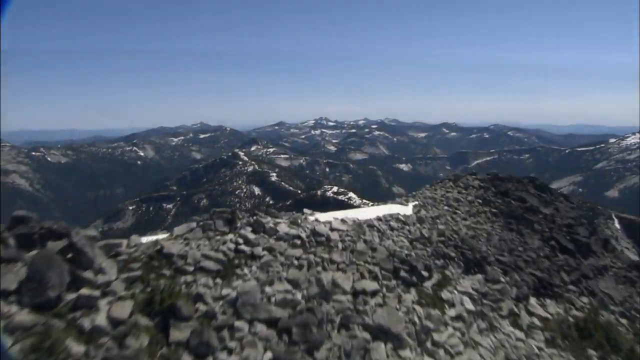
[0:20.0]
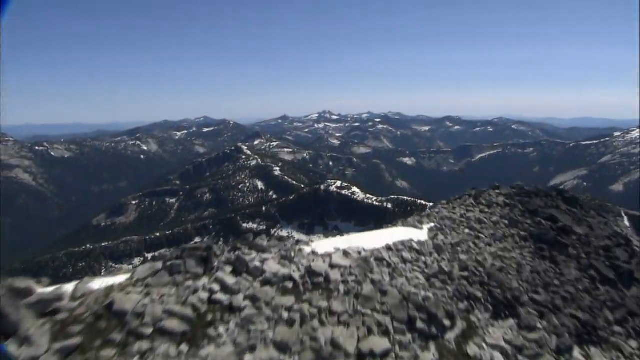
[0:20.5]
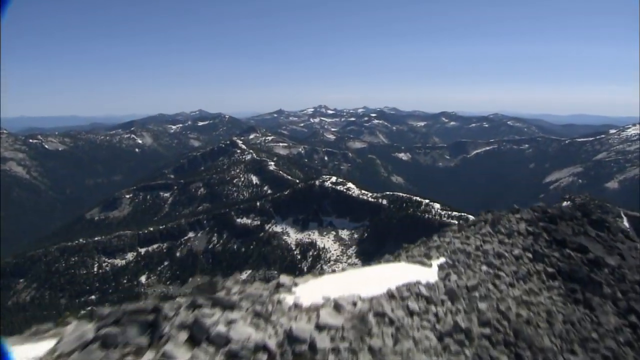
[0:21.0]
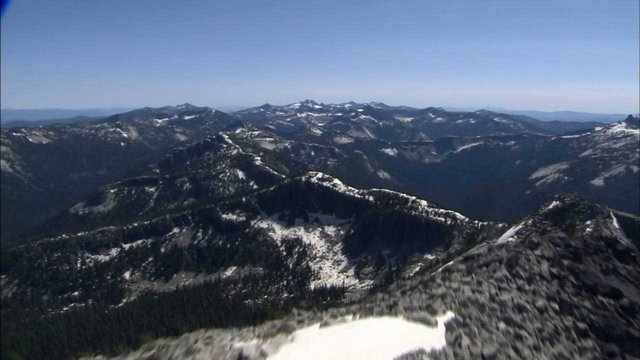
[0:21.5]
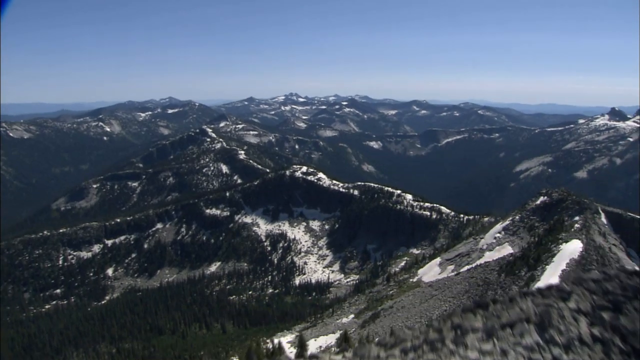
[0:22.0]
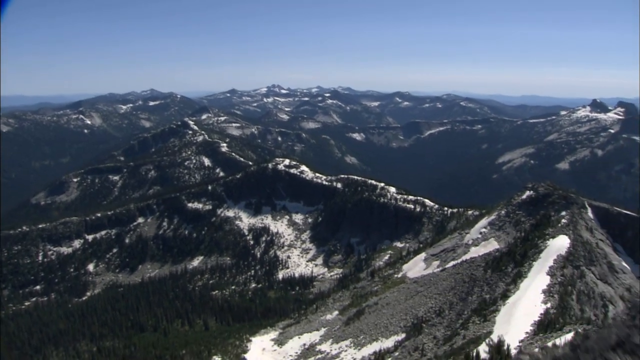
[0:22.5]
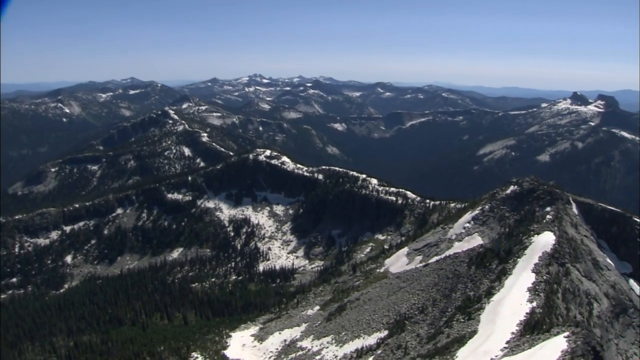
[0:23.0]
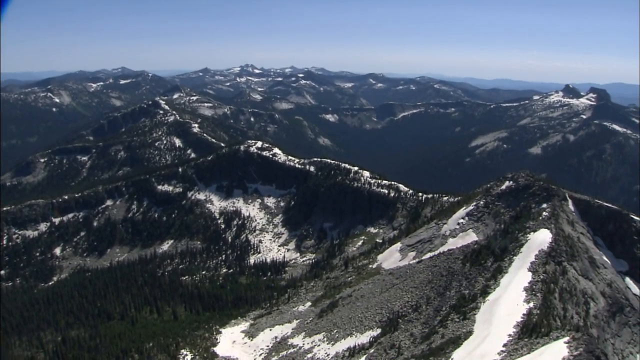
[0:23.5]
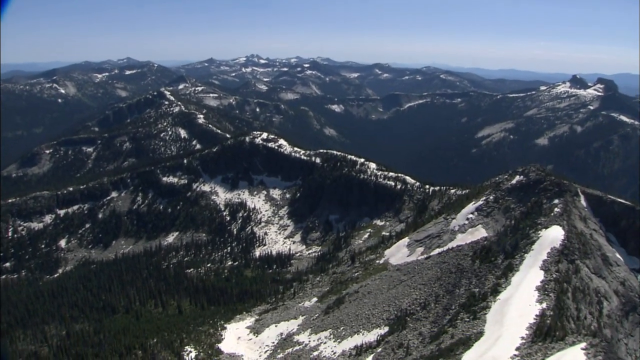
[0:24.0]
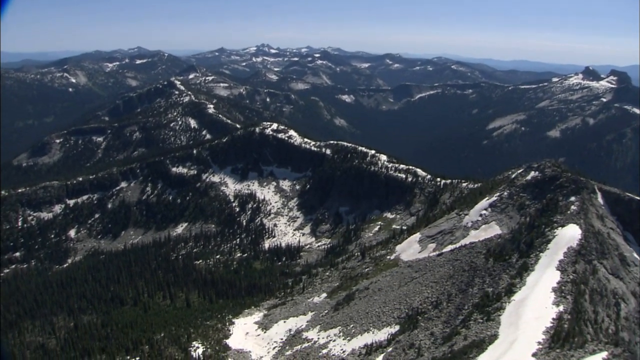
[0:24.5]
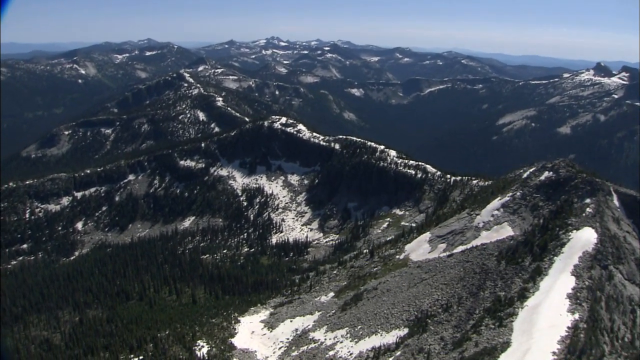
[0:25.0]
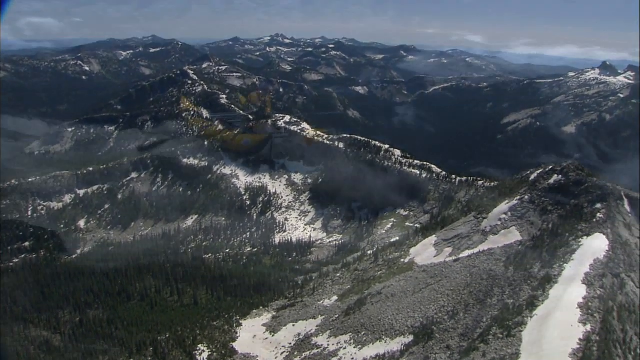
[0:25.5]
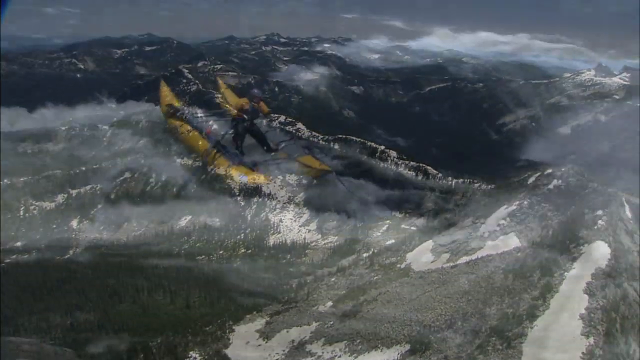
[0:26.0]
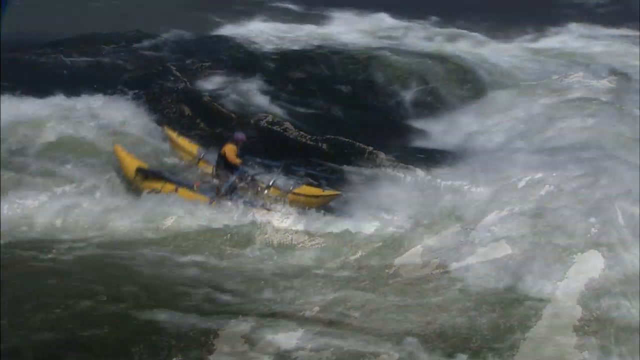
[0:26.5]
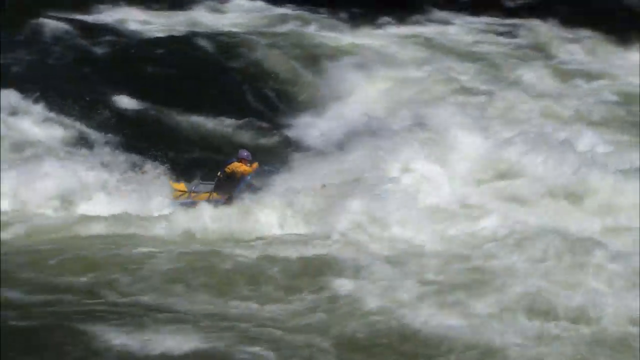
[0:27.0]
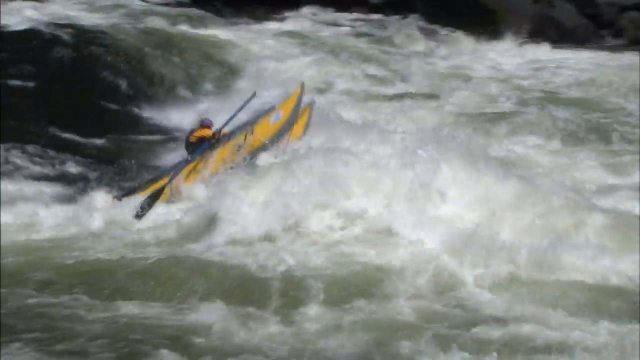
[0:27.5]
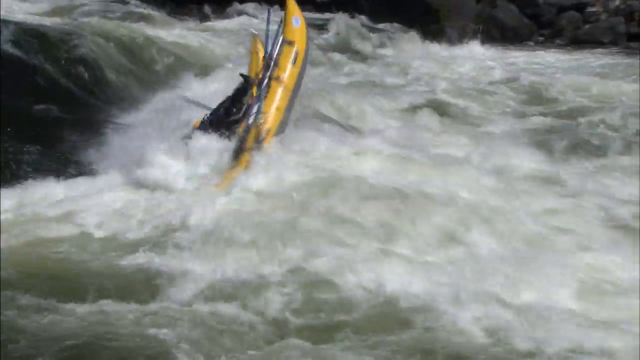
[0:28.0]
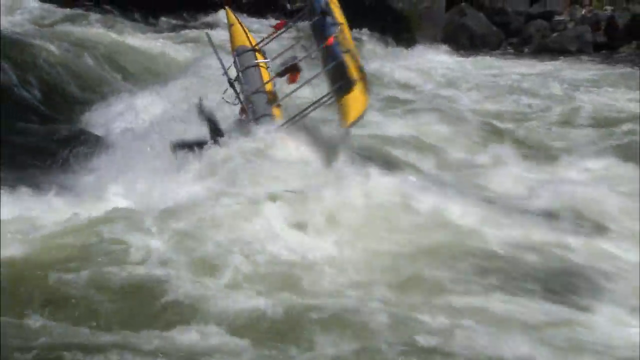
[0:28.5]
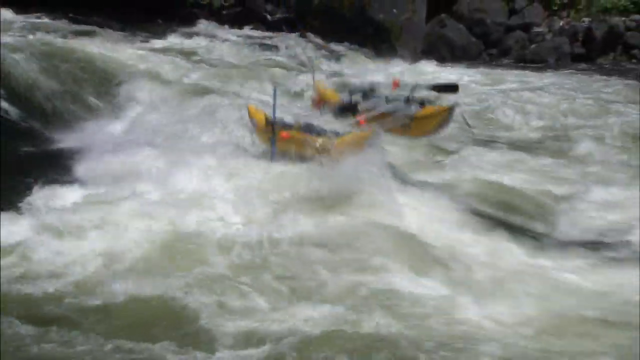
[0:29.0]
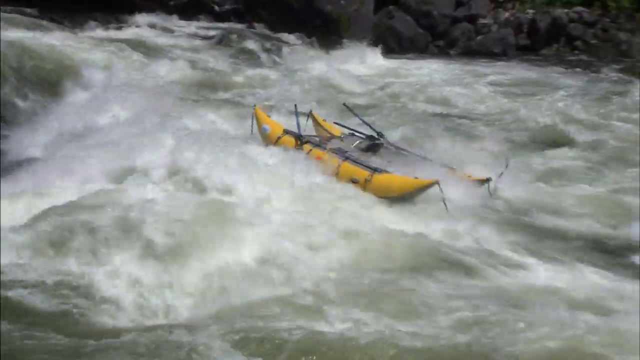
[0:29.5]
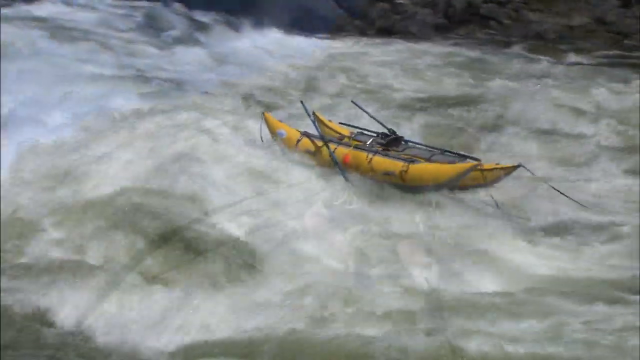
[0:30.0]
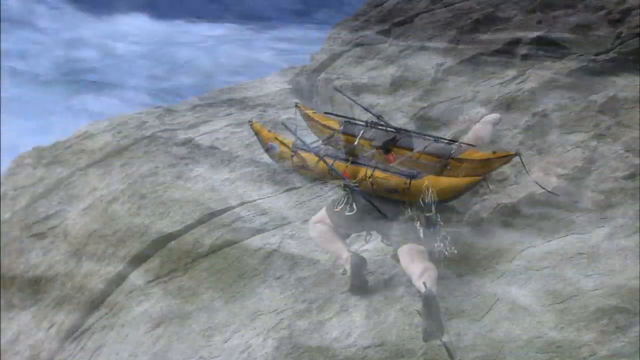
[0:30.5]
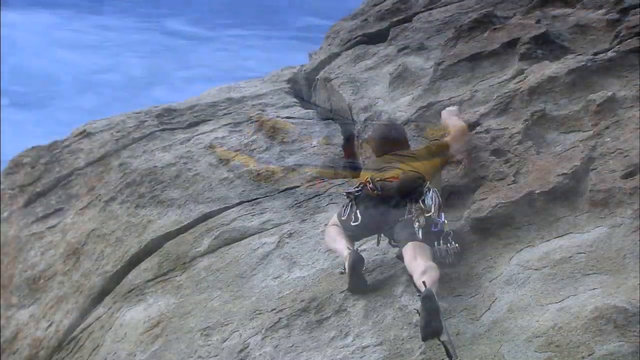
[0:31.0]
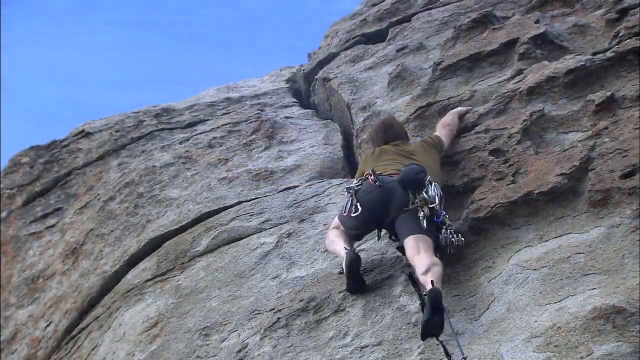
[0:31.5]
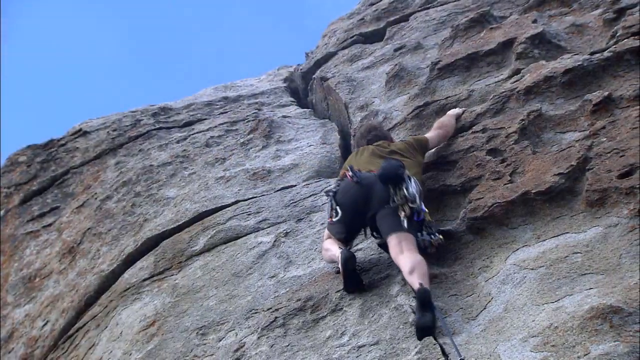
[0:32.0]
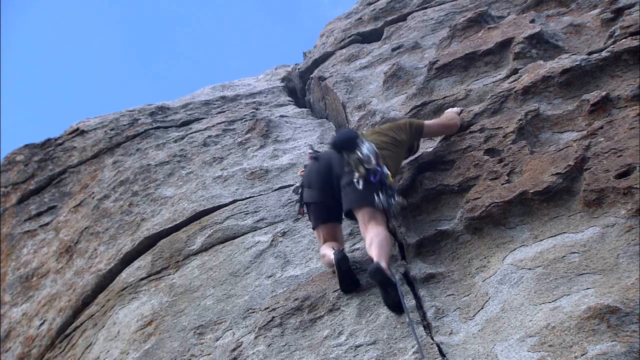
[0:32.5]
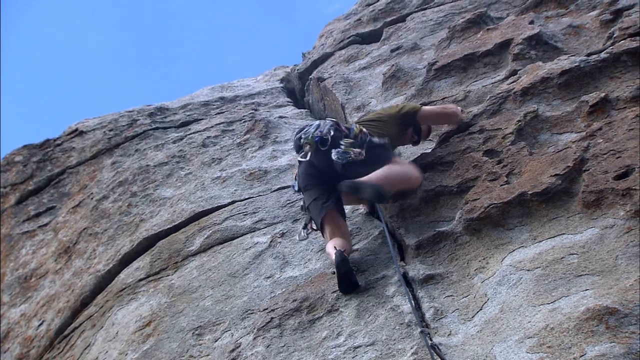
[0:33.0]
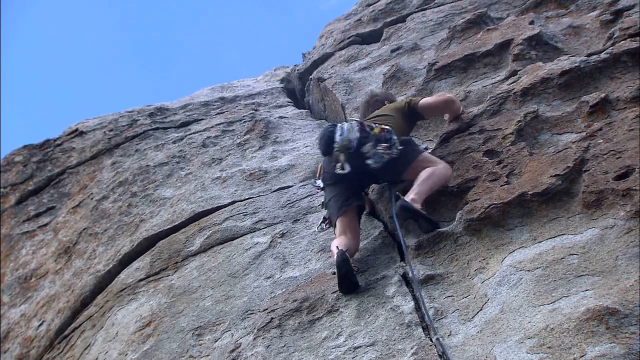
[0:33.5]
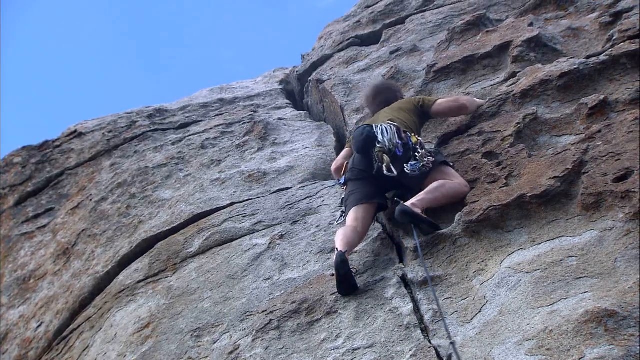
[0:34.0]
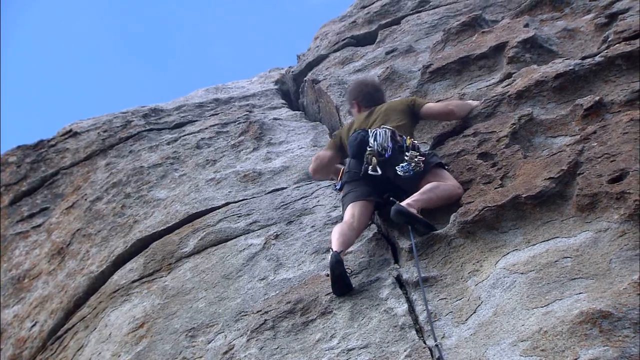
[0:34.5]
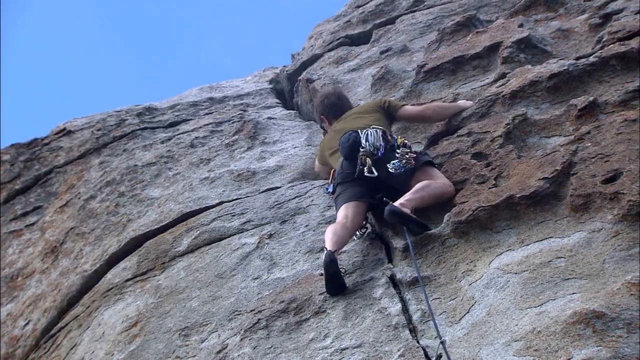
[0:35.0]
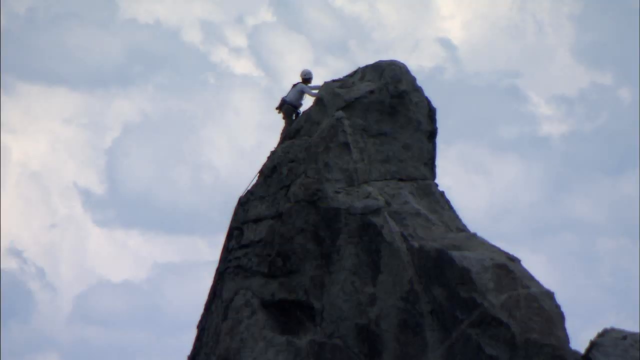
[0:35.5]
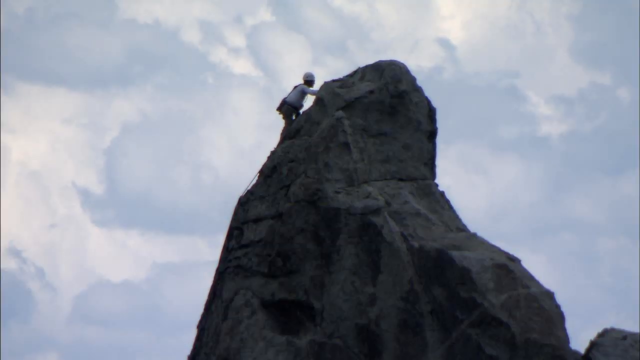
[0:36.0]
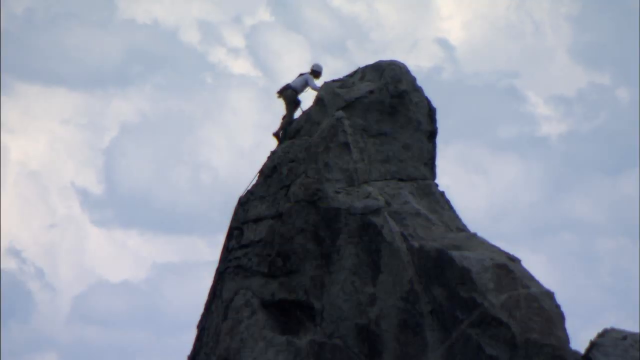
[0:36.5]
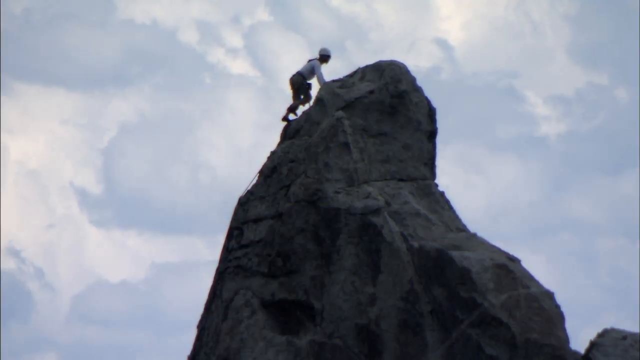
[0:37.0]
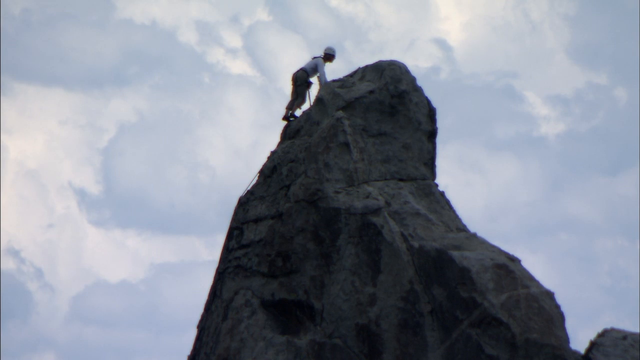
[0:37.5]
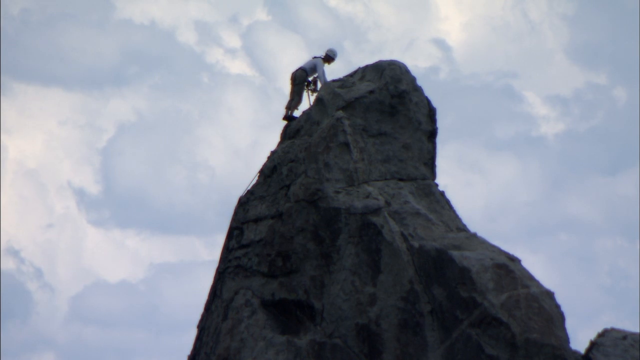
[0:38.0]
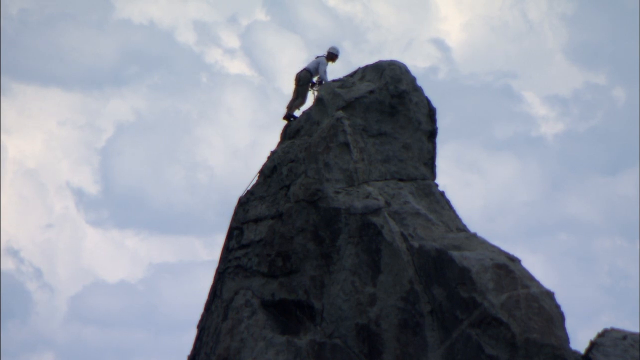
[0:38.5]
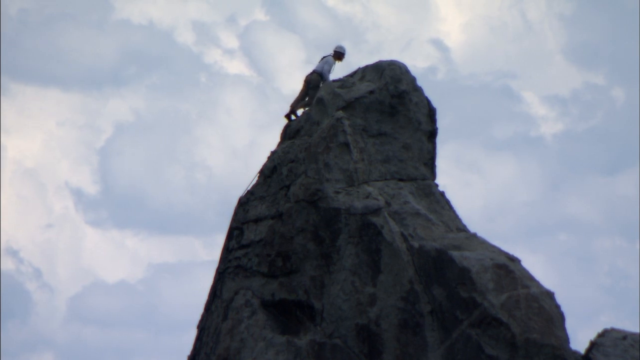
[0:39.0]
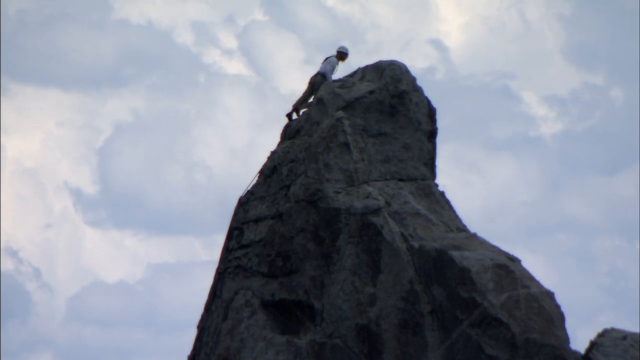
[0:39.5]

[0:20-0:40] Drone footage of the very mountainous area continues, with no text on screen, just aerial views of the mountains and a light blue sky at the top of the screen. The drone moves forward, revealing a new mountain down below and an opening of what looks like a forest area on the bottom left side of the screen. The scene changes to someone kayaking with two kayaks; they fall off the boat and land in the water, almost doing a backflip, and with tons of waves crashing around, the person ends up under a mass of white crashing water. Next, what looks like a person climbs the edge of a mountain, seen from behind with the camera looking upward; a line appears to be attached to the person's shoe. A more long-distance view then shows a person climbing the top part of a large rock structure.